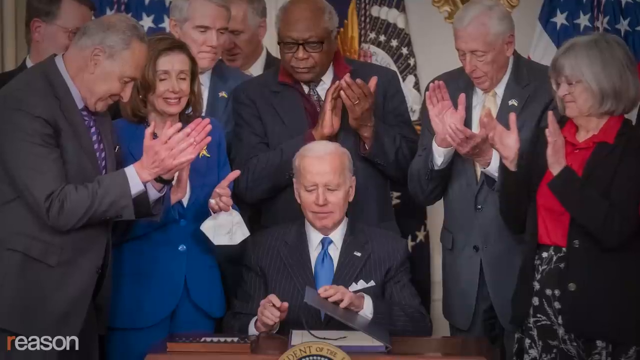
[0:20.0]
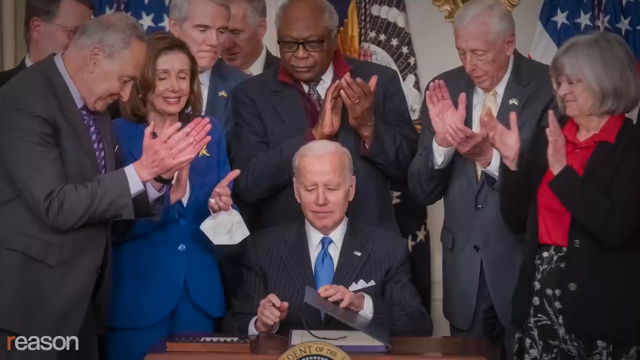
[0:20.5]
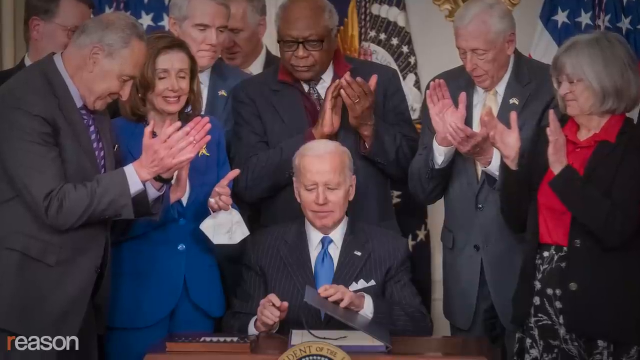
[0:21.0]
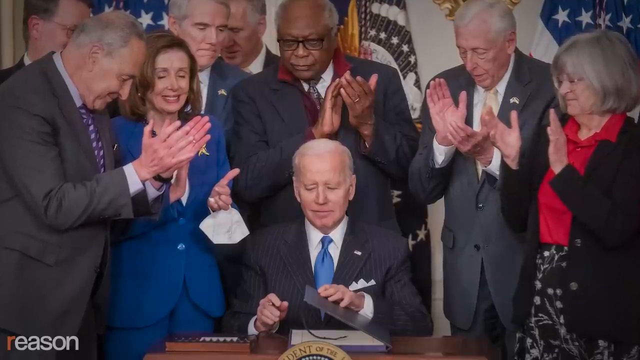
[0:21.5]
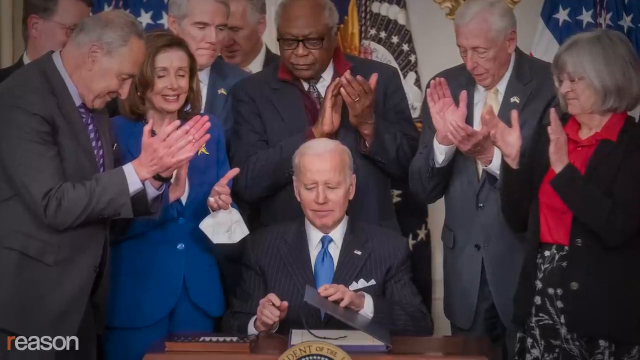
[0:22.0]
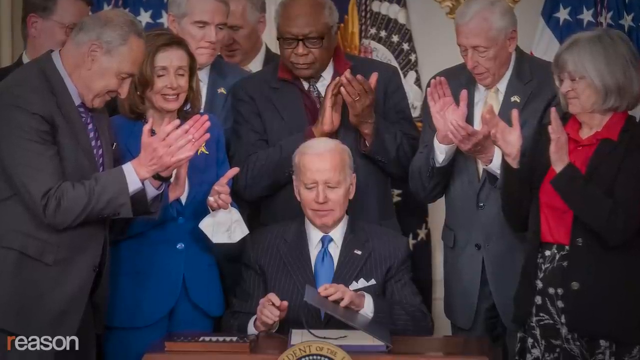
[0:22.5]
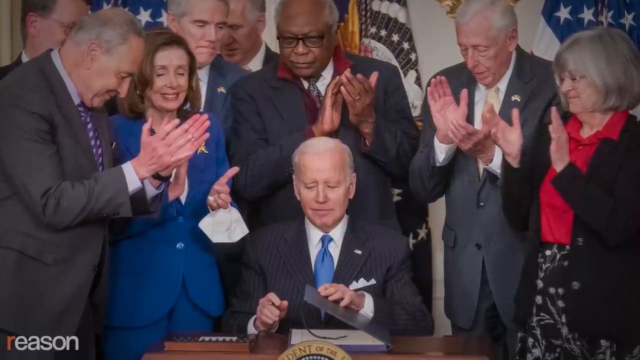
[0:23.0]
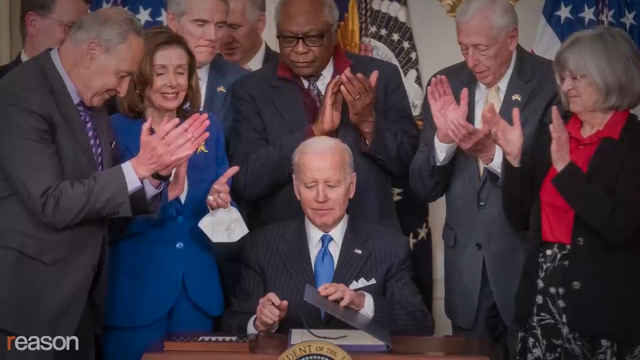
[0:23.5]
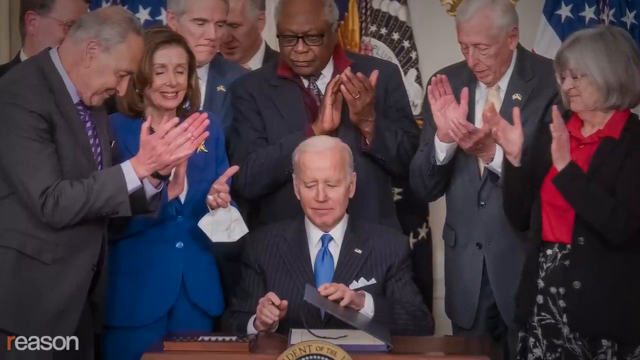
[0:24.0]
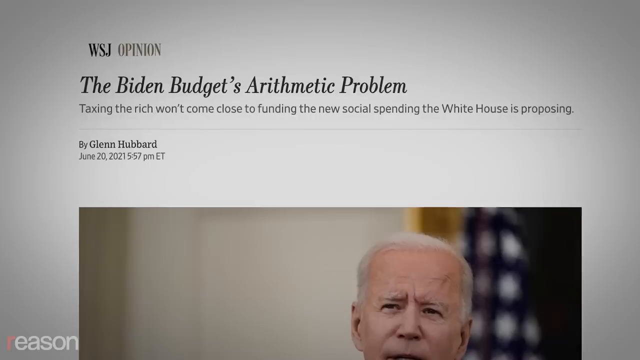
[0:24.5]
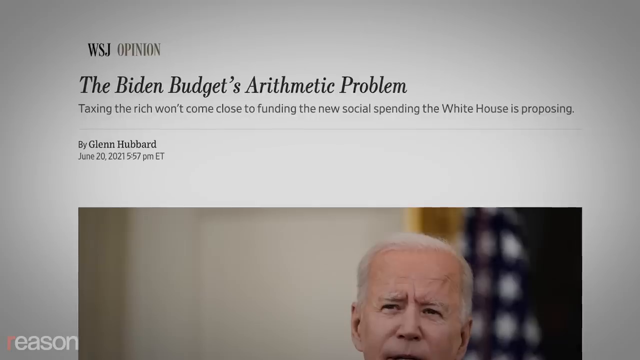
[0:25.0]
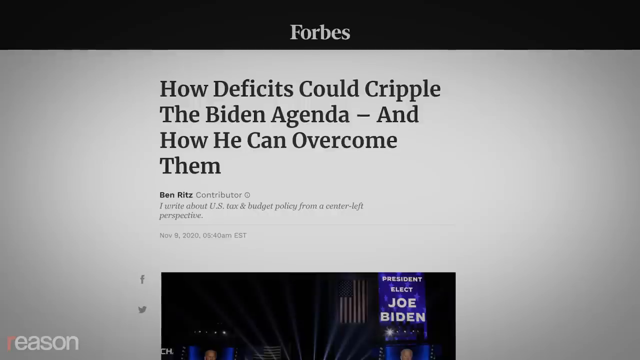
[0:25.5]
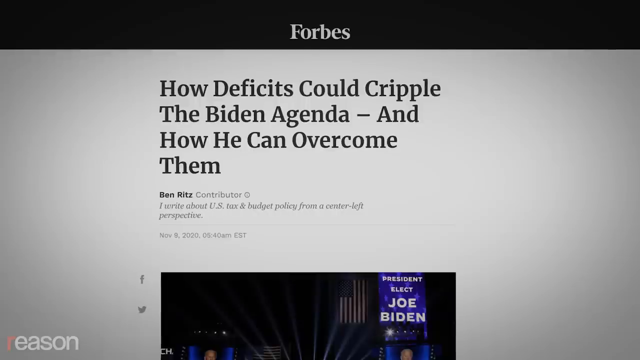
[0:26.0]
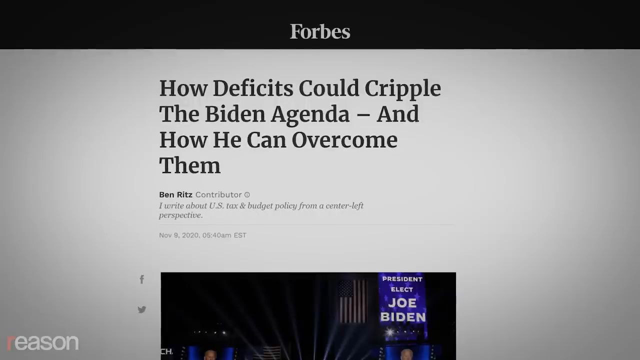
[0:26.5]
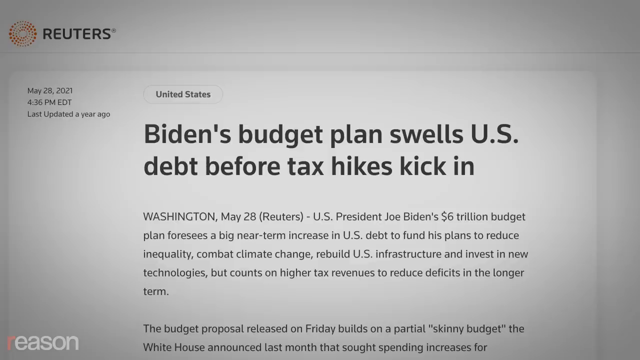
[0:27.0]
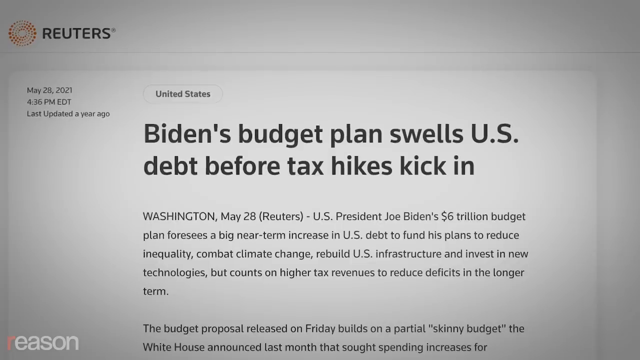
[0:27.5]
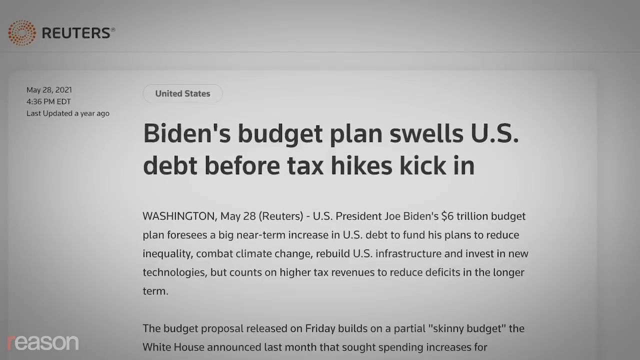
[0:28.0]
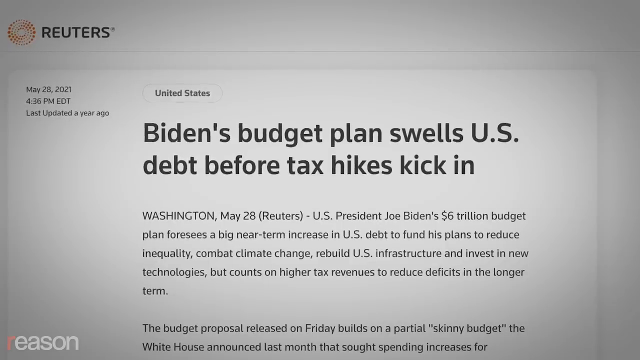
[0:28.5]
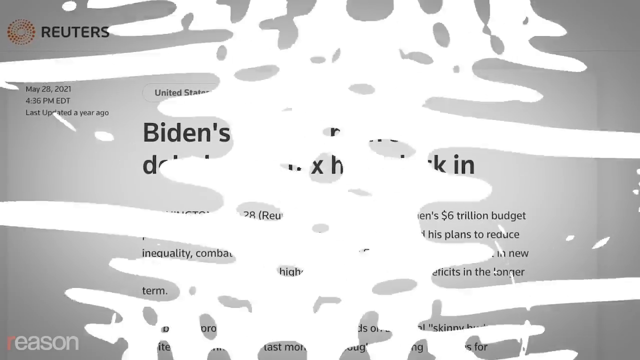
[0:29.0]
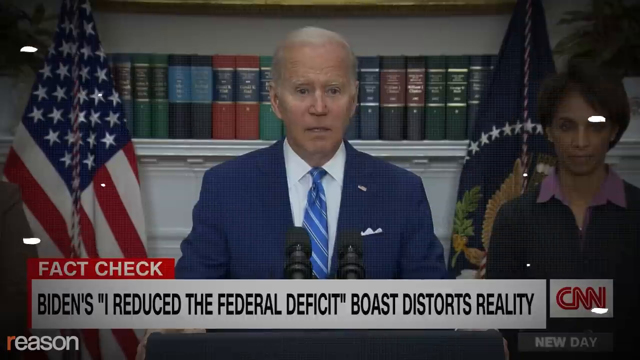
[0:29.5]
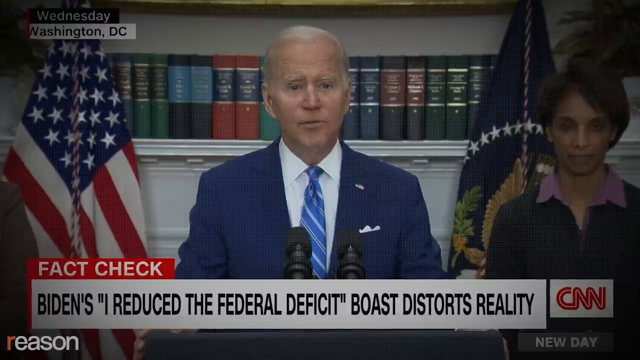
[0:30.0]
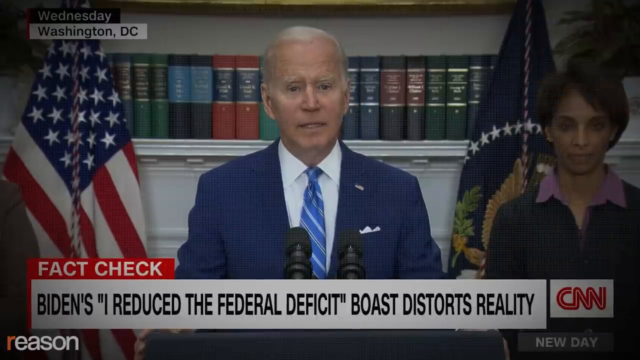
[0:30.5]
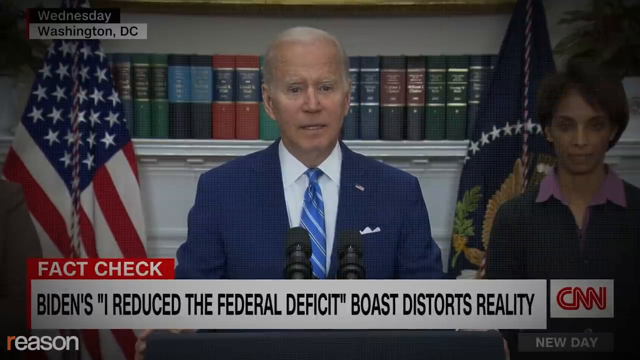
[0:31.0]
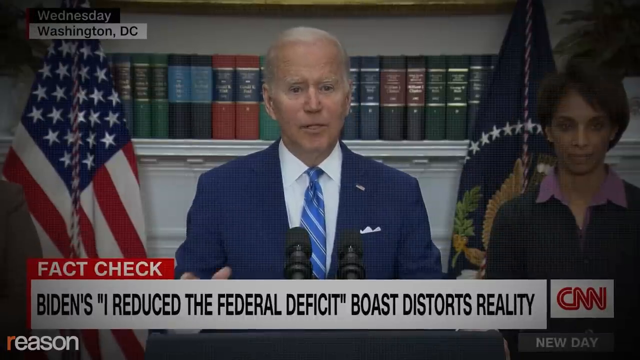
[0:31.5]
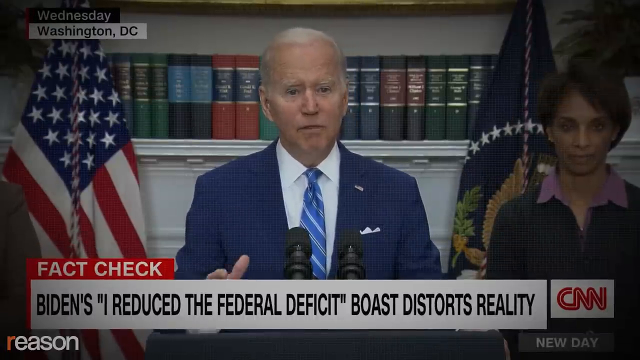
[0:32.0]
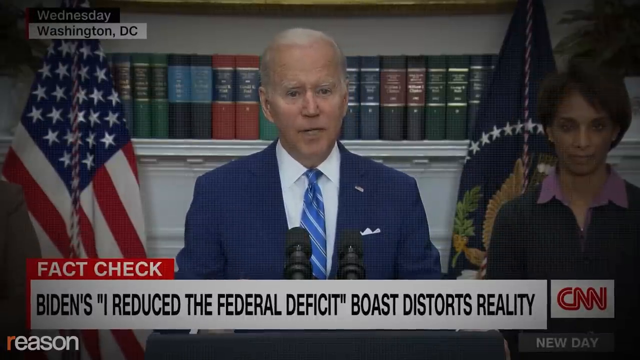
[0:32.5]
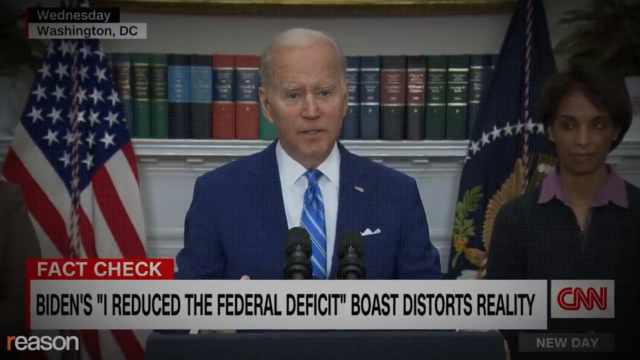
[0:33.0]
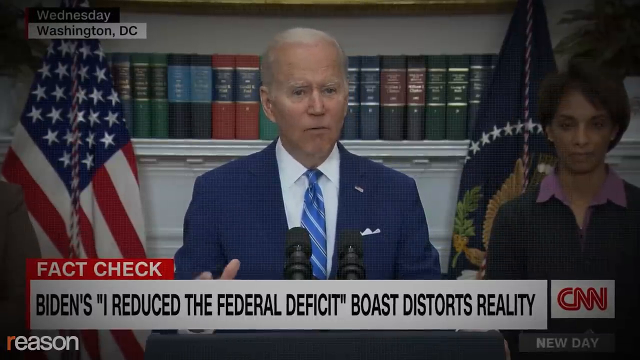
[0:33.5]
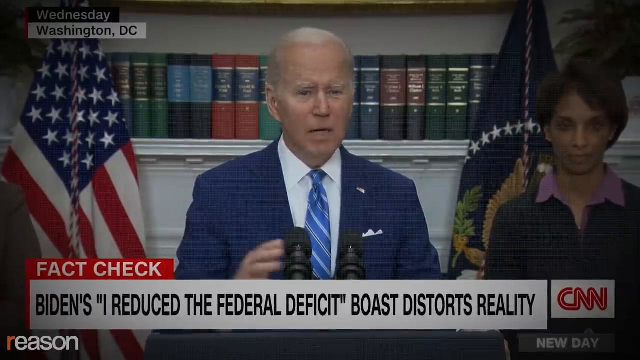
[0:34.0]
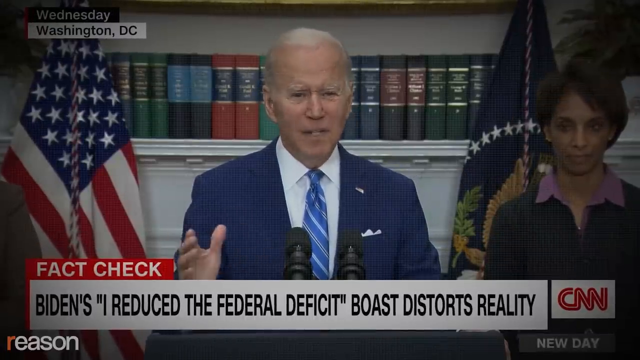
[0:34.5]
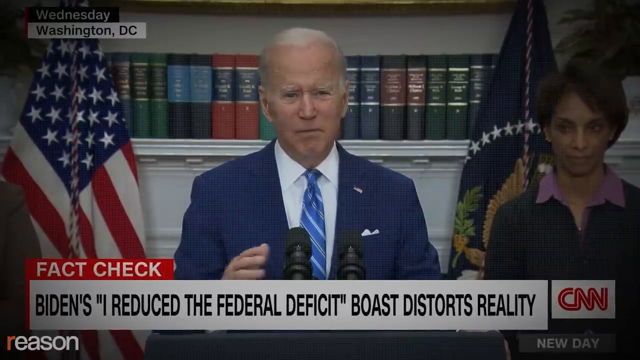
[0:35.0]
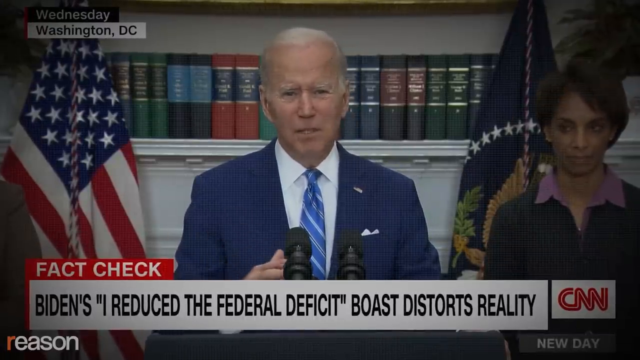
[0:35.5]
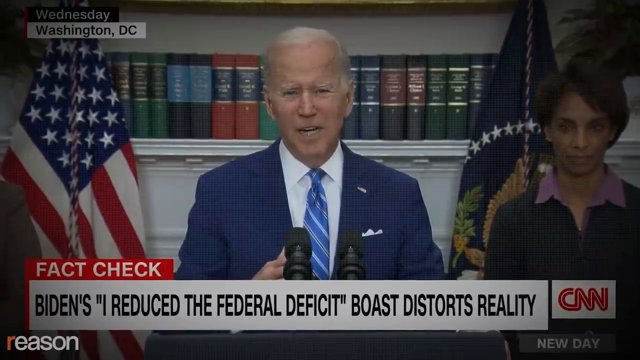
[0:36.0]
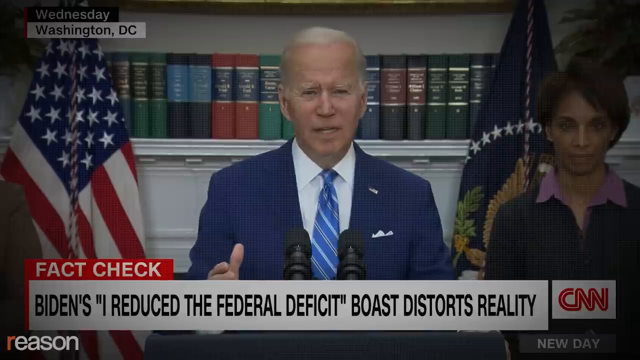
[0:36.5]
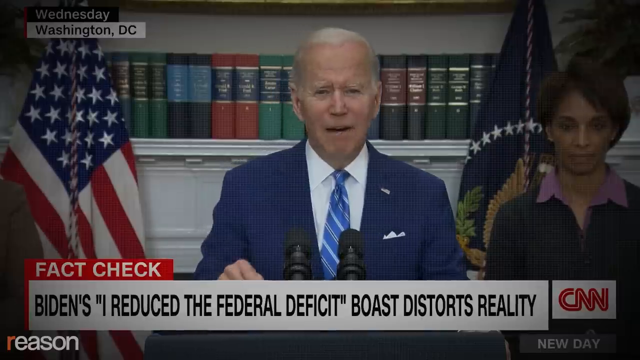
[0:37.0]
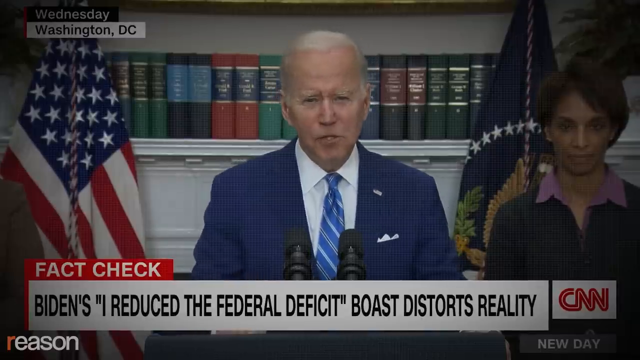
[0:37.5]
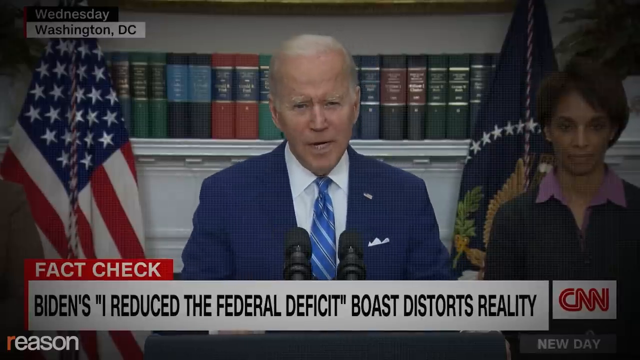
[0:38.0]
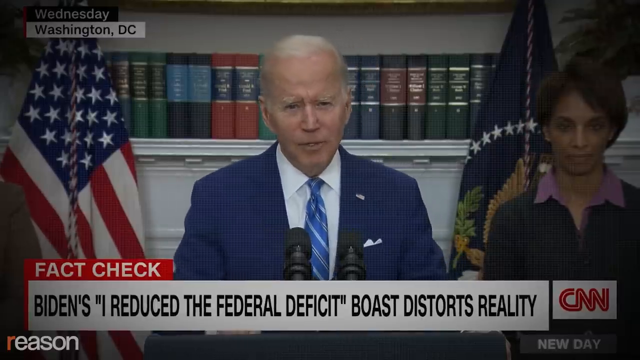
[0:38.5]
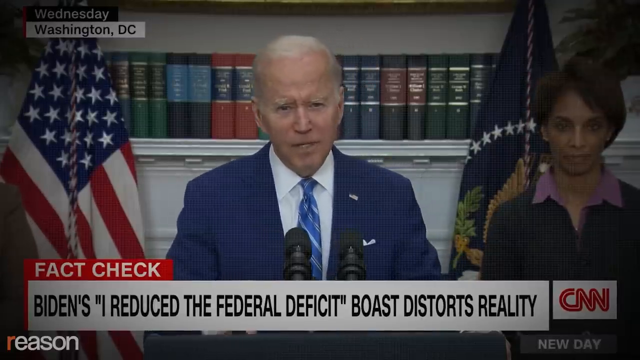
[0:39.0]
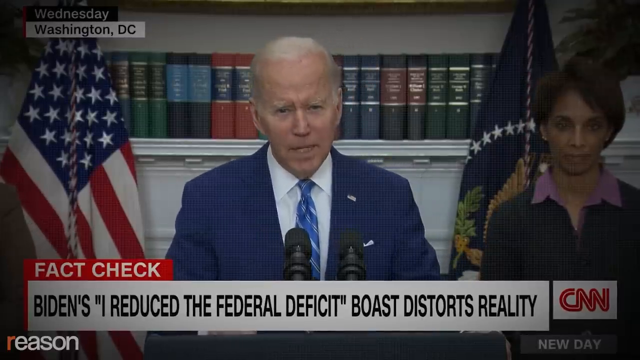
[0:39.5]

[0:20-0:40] After a brief green screen, what looks like a computer screen appears, with a few webpages popping up showing news articles about things Joe Biden had done, each on screen for about a second. The video cuts to CNN footage of Biden speaking in a different area, on a platform with a few microphones, a series of books behind him that may be encyclopedias, and an American flag. An African-American woman, apparently in her late 40s with a short haircut, stands to his right; she is not the vice president. A CNN headline includes the words "Biden's I reduce the federal deficit" and "distorts reality", and the CNN logo is in the corner. Biden wears a blue suit and tie with a white shirt and has a somewhat neutral look on his face.